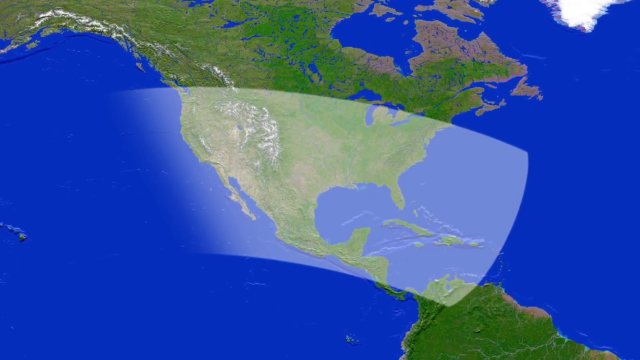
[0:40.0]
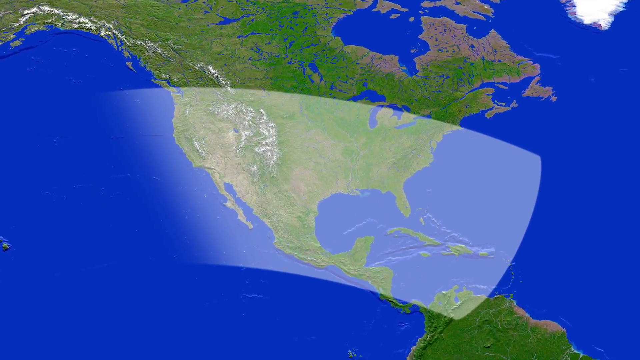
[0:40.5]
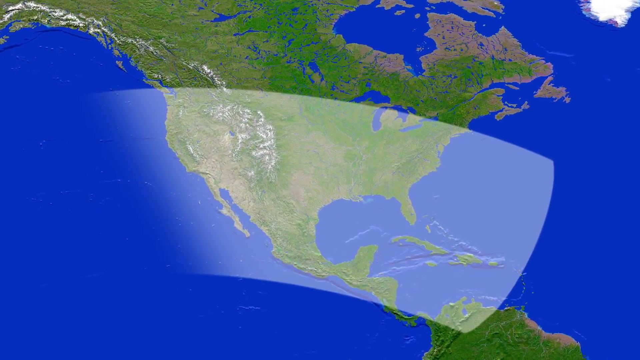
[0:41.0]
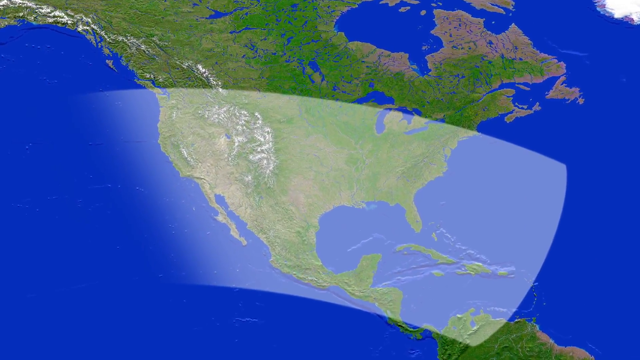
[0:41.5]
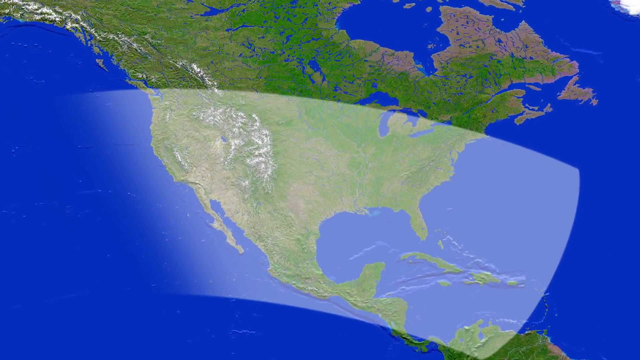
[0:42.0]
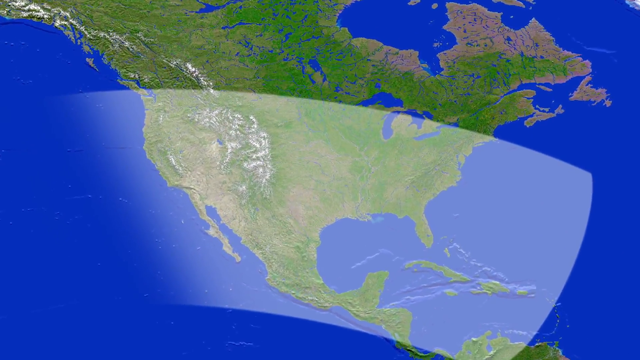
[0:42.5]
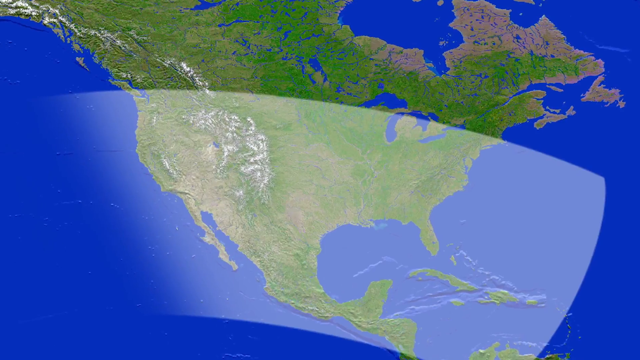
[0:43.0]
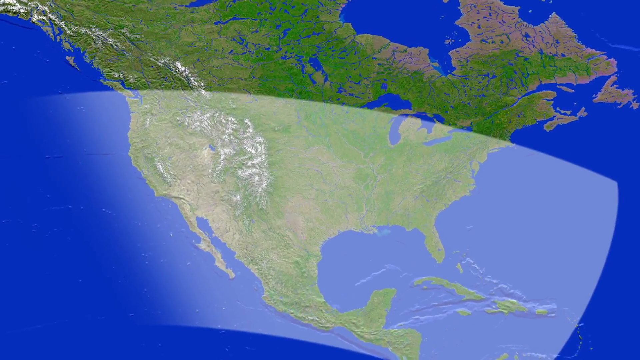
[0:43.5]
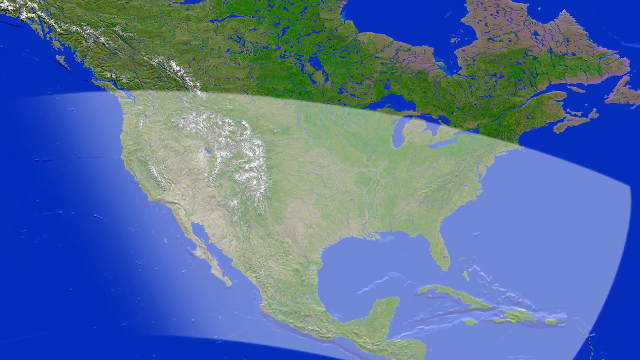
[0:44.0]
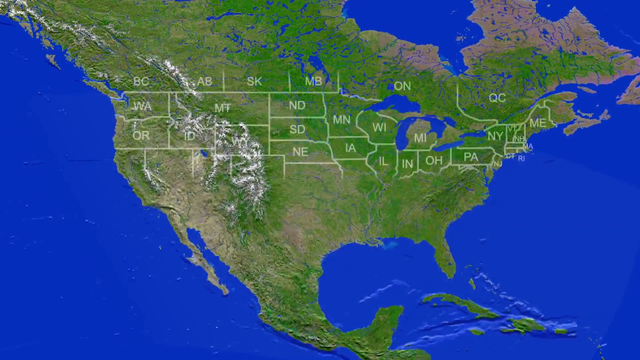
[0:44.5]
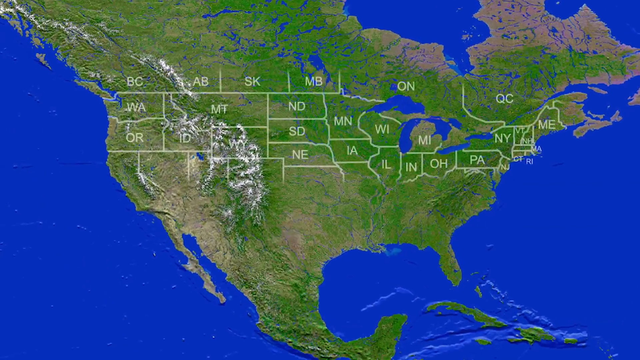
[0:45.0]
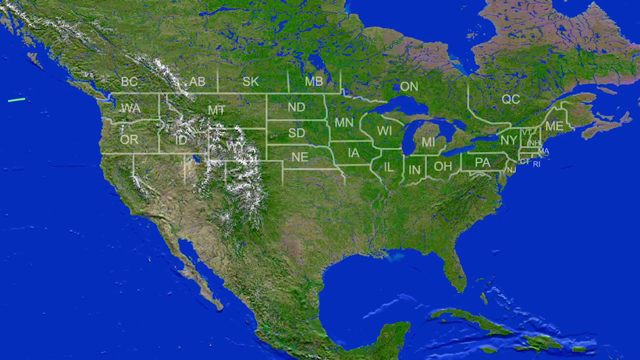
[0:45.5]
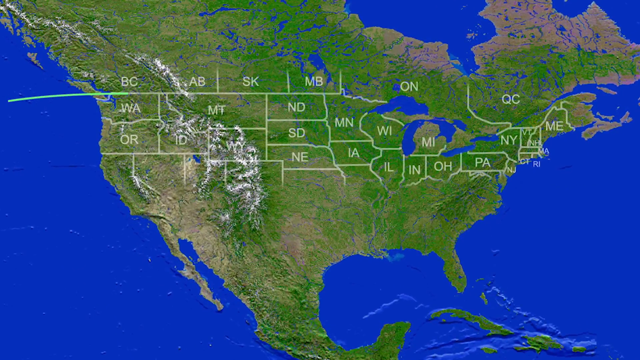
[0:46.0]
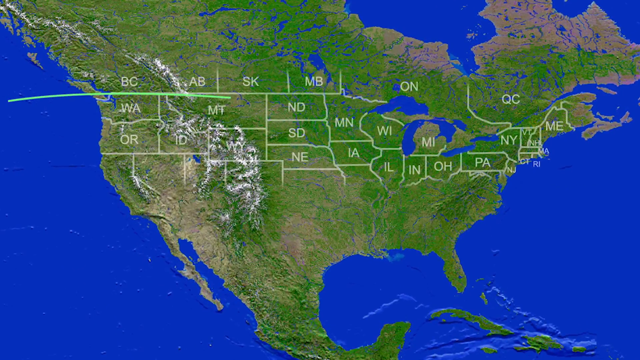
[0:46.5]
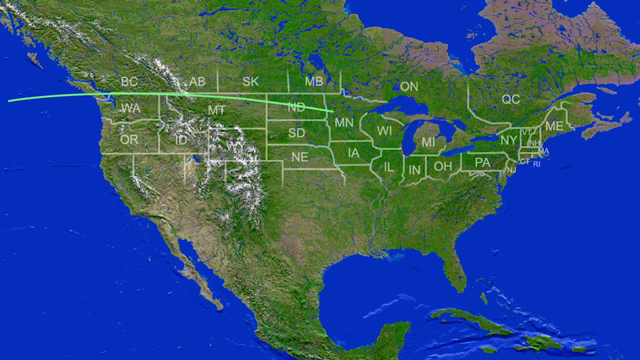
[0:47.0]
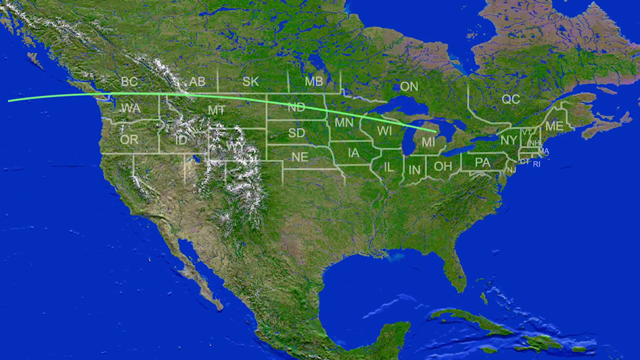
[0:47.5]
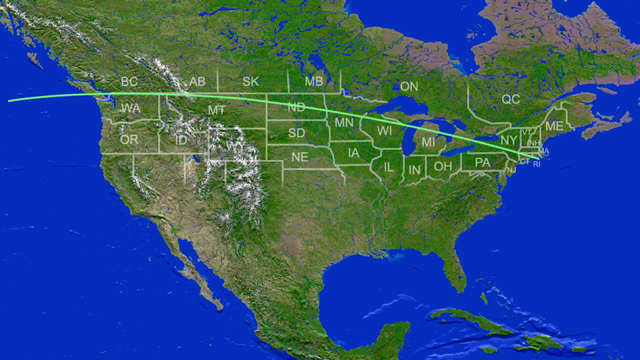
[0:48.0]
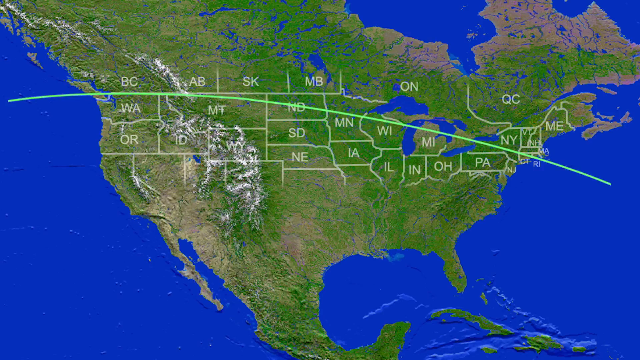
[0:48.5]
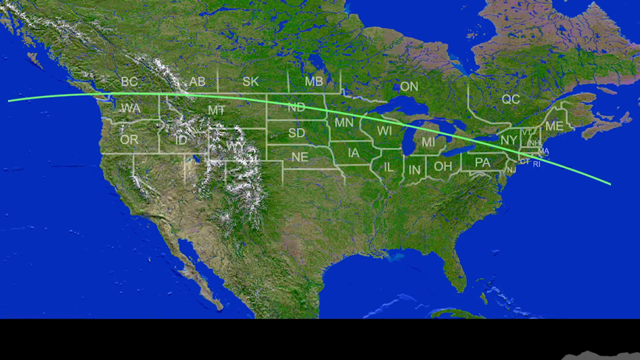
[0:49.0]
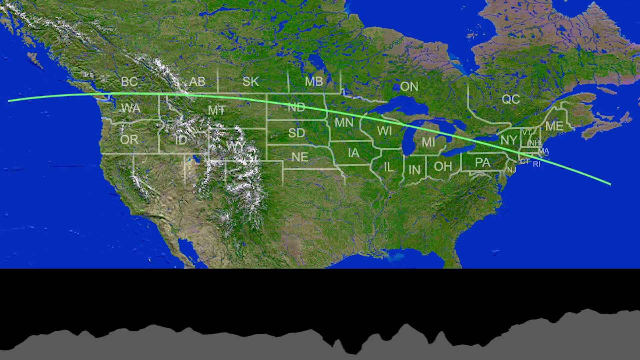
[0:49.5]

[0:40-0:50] The world map keeps zooming in on the United States. A big clear white area, almost like a windshield wiper, covers a large chunk of the country, apparently from Michigan down to the bottom part of Mexico, seemingly indicating where the eclipse will happen. A green line is then drawn marking the cutoff point, apparently separating people past New York, who won't be able to see it, from everybody below it, who will.